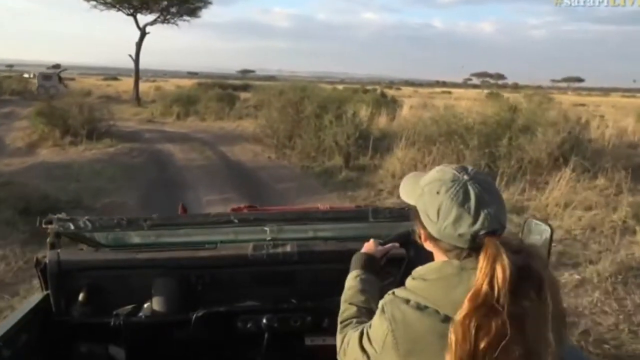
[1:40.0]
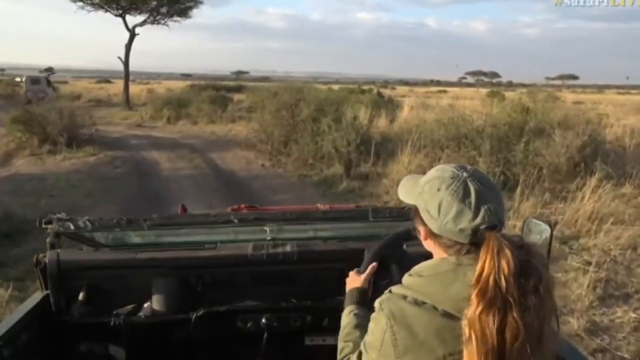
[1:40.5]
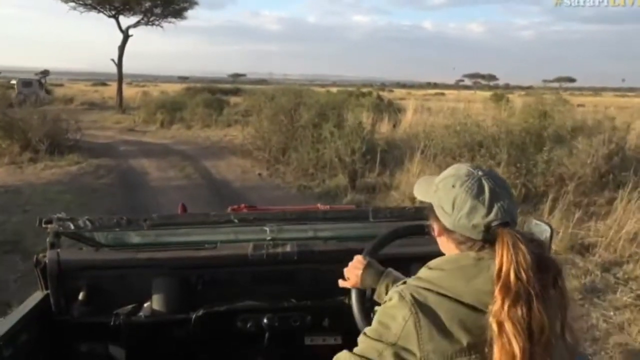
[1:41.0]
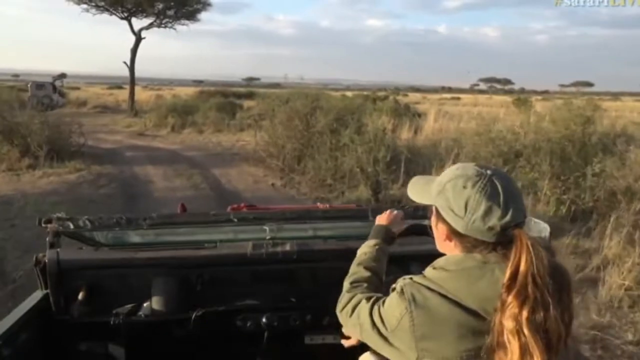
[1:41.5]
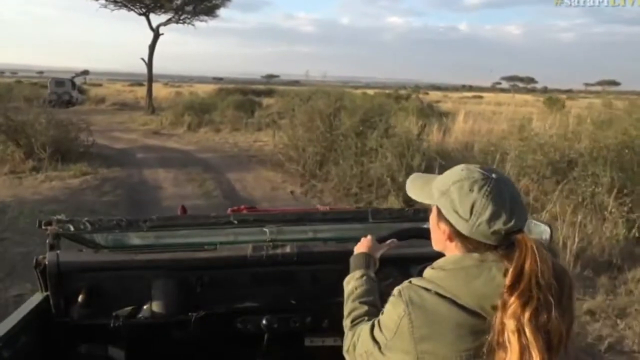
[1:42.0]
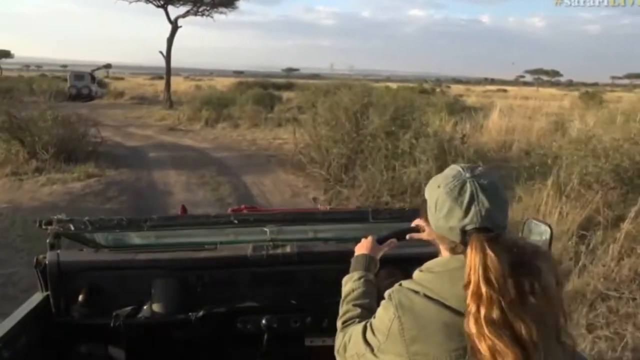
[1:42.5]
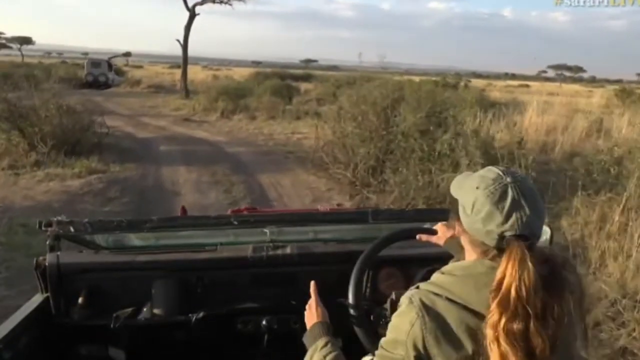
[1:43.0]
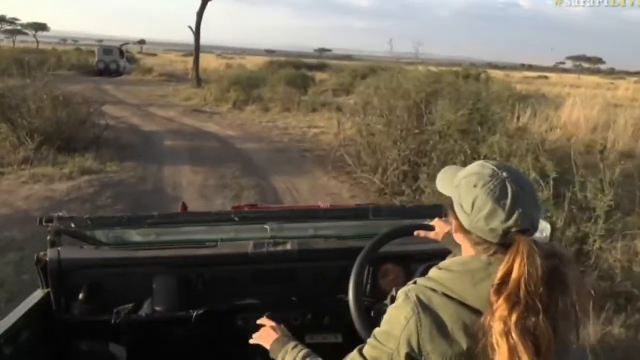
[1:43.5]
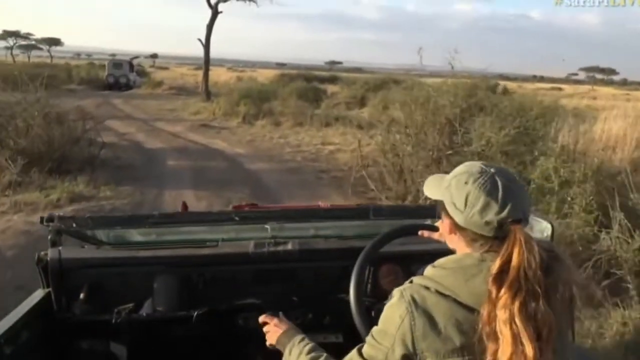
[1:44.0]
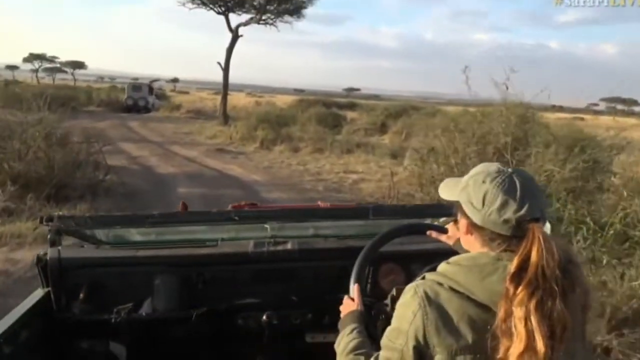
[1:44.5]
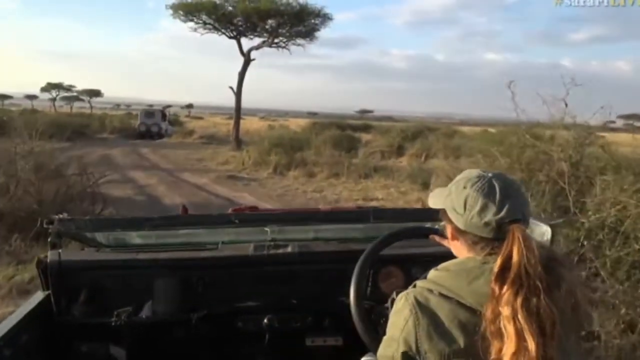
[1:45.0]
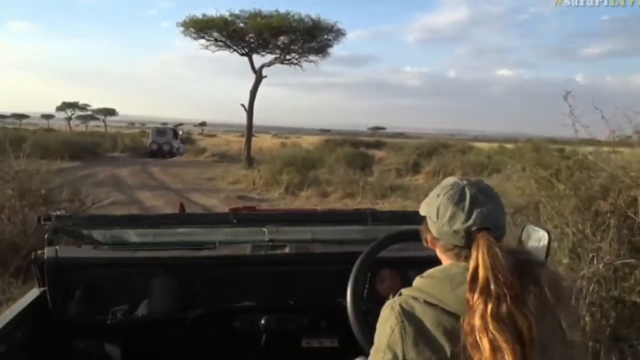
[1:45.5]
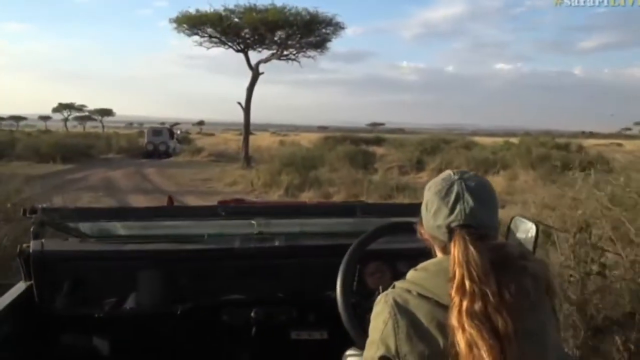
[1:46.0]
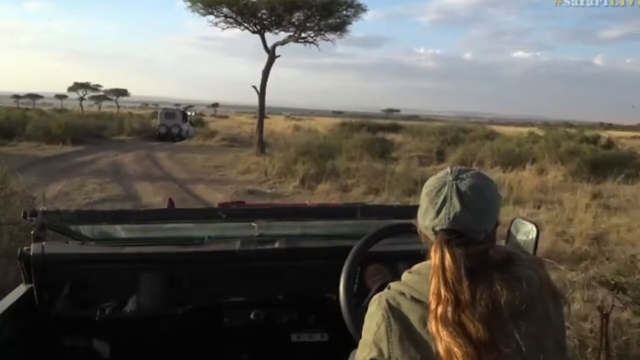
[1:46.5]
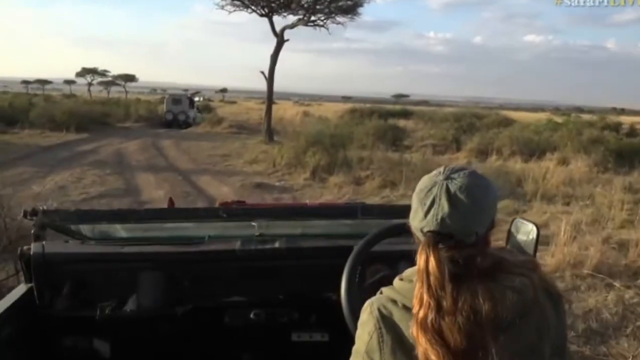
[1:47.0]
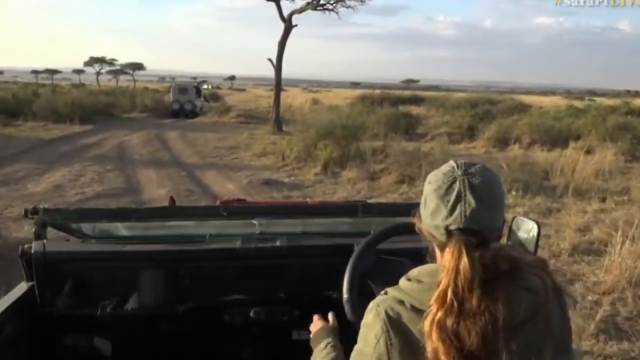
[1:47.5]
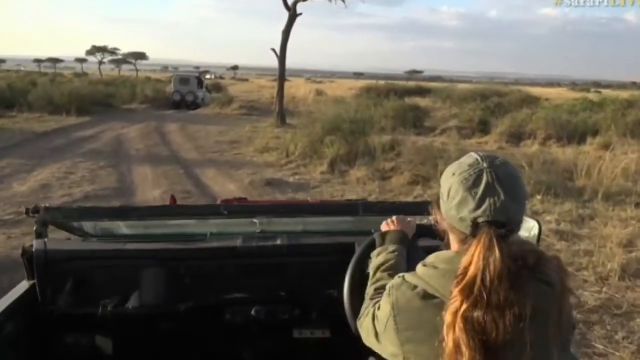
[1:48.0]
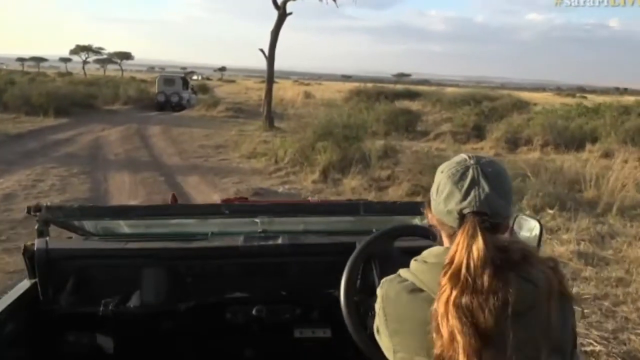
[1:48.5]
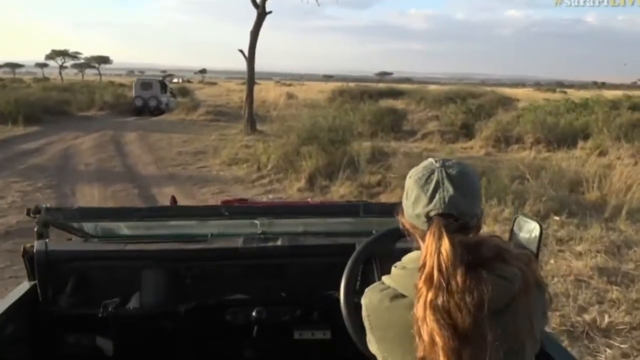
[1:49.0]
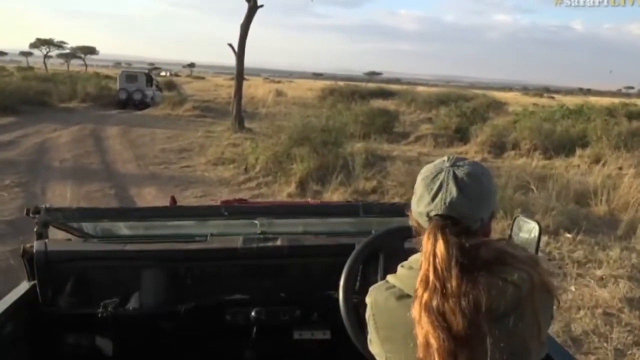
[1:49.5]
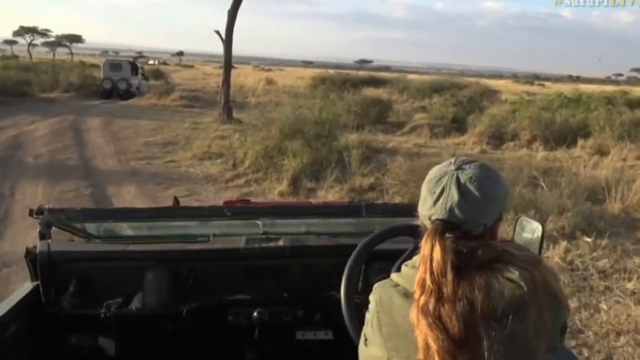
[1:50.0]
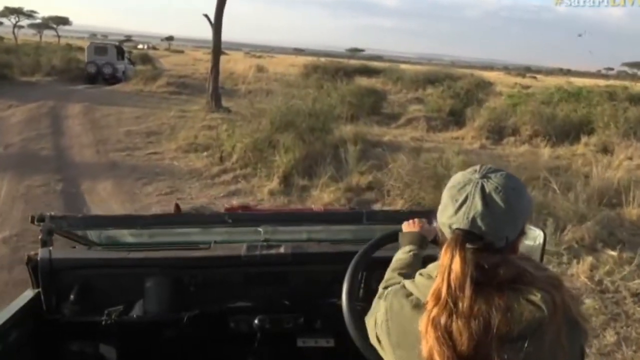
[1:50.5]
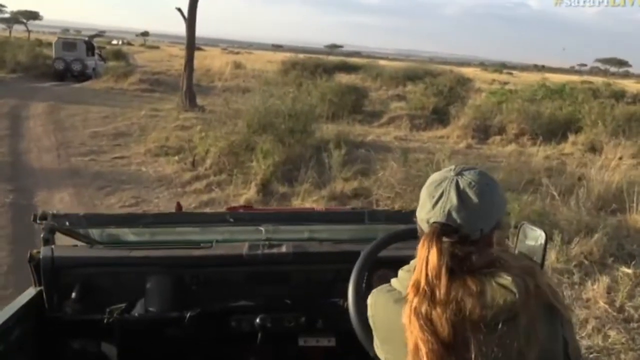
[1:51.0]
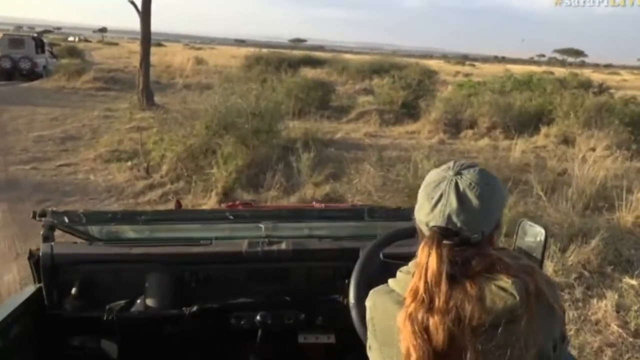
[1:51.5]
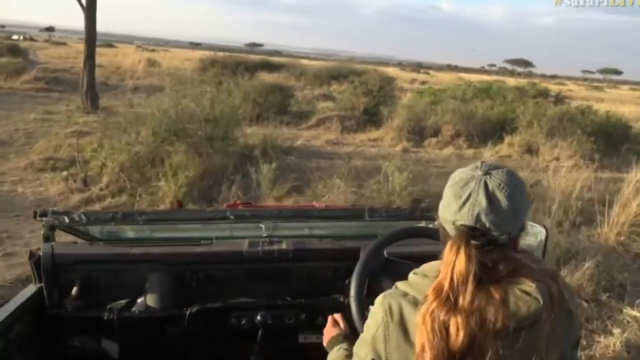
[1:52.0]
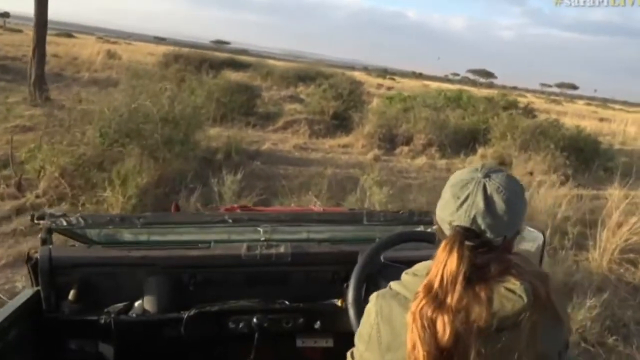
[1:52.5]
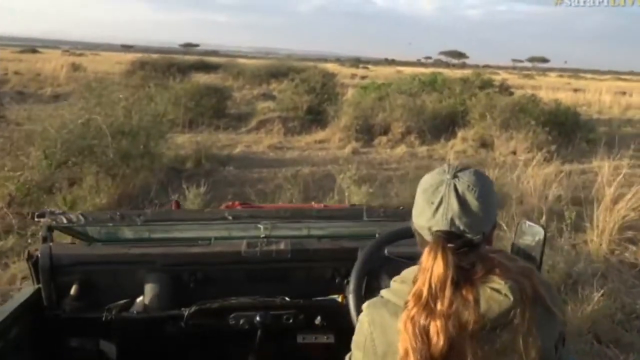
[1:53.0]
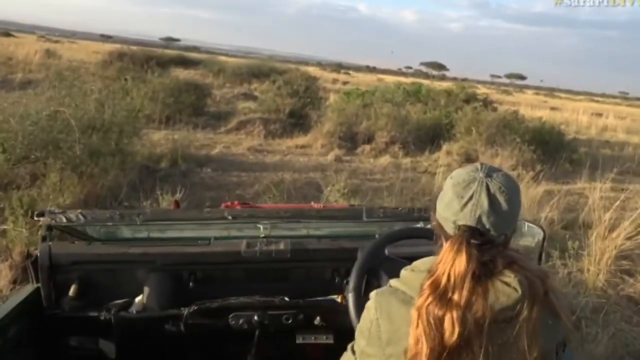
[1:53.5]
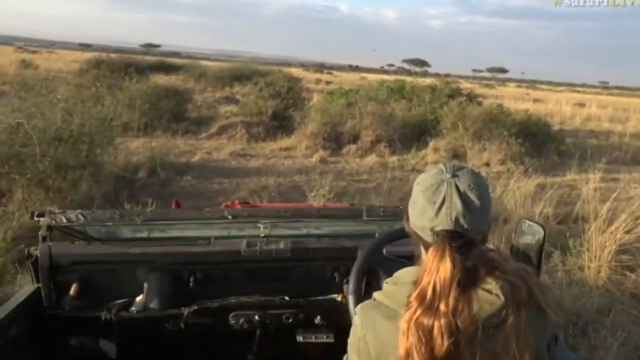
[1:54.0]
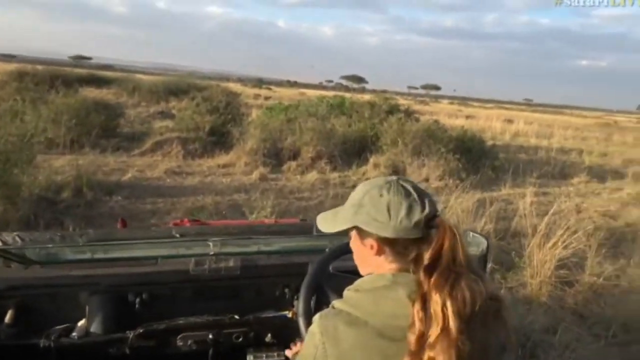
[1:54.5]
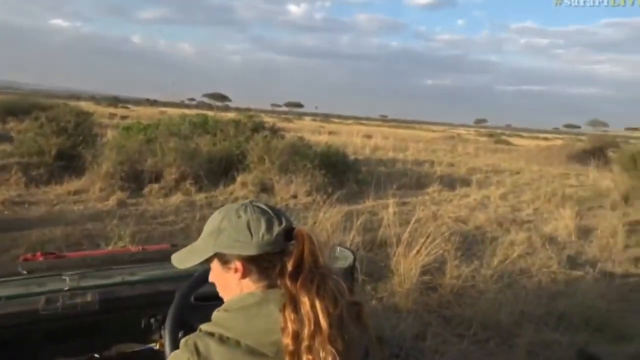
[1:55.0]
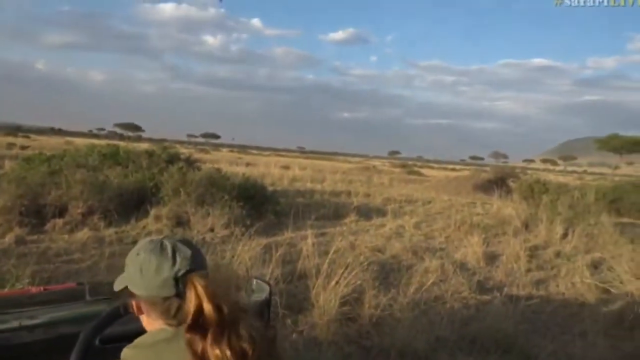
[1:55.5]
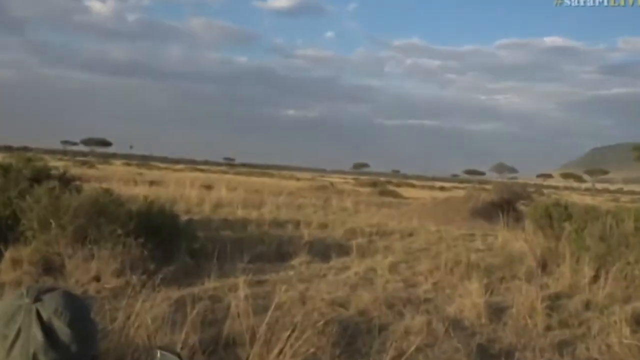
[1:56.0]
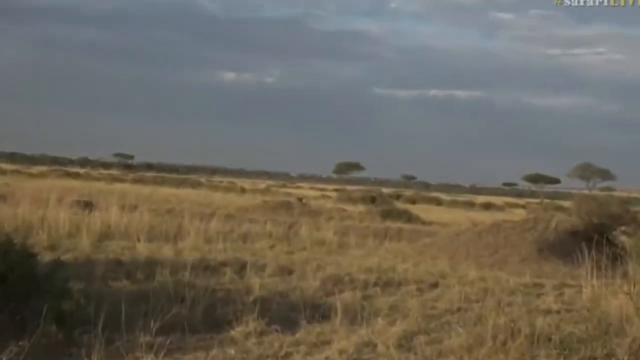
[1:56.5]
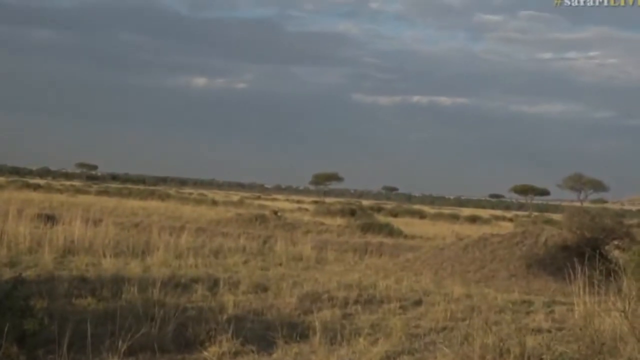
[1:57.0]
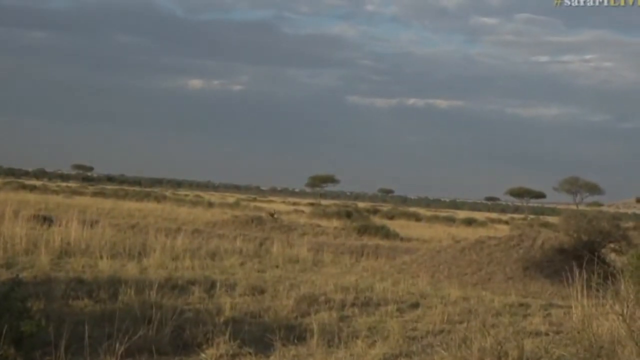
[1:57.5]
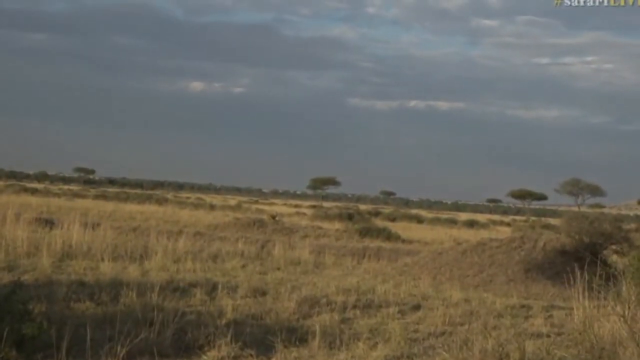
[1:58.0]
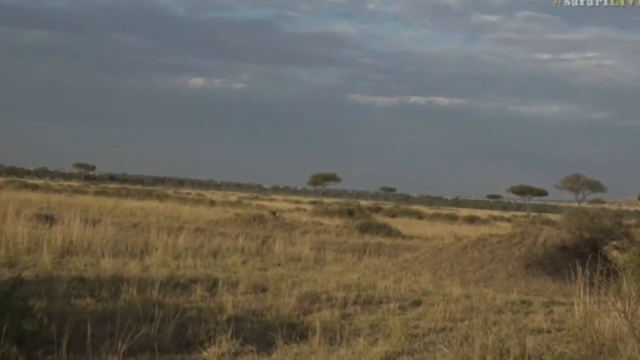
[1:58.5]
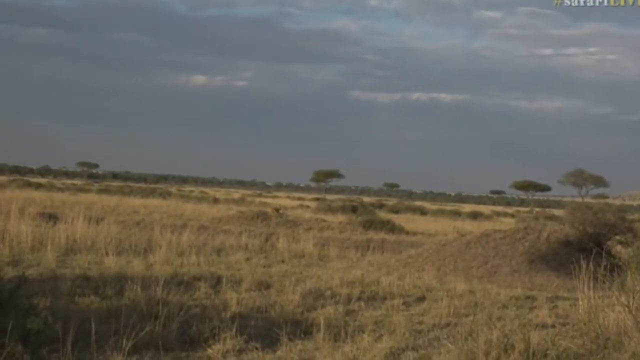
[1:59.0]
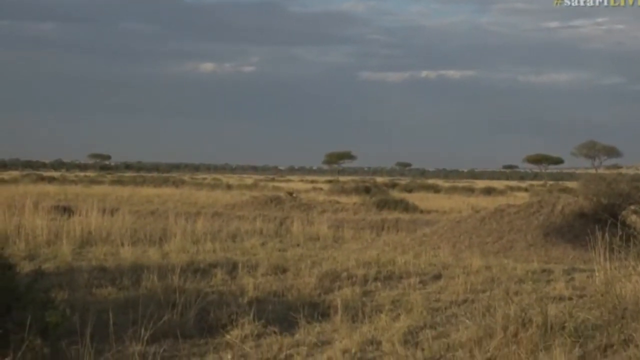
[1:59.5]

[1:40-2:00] The word "Safari" is in the upper right corner as the view follows a woman driving a Jeep. She wears a green hat and a green hooded jacket. The Jeep is green with no top, and its steering wheel is on the right side. She drives on a dirt road with expansive land on both sides, where the weeds and brush are dry. There are trees, and on the horizon there is possibly a mountain or more trees. Above the horizon the clouds look like one huge cloud. The sun is setting in the distance, casting shadows off the trees and weeds. The woman pulls off the road onto the side, and land stretches as far as the eye can see. The camera pans closer to the clouds on the horizon, which look like one massive cloud.